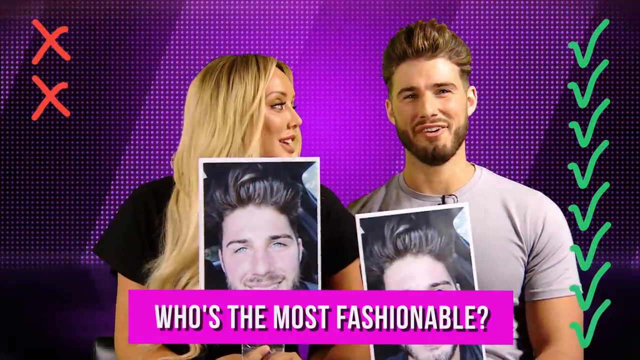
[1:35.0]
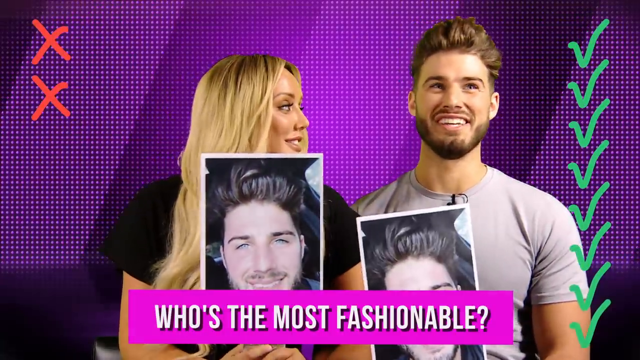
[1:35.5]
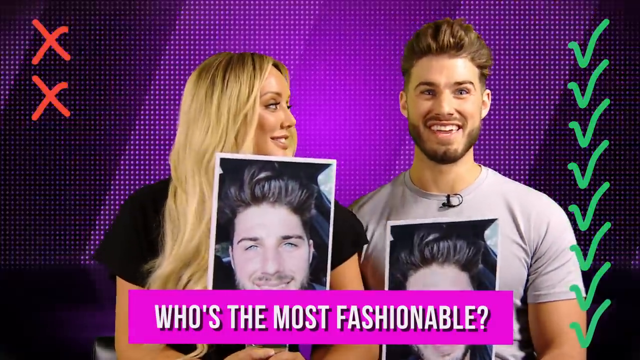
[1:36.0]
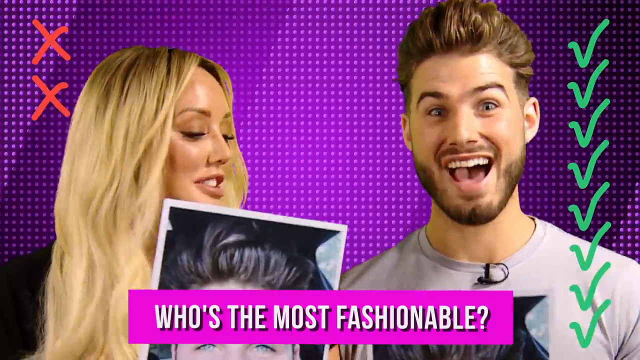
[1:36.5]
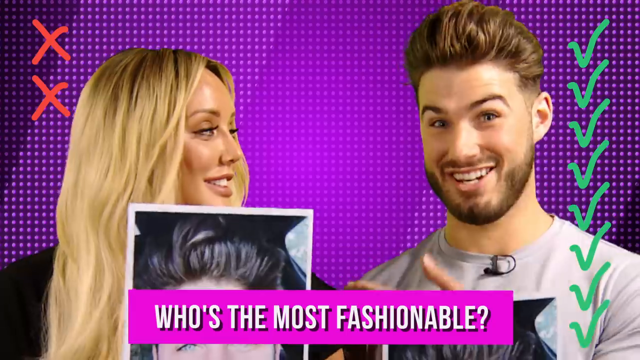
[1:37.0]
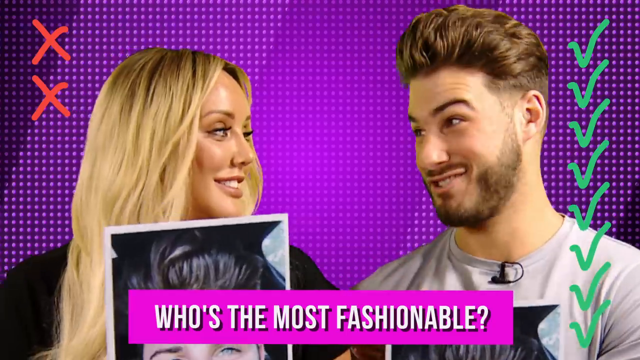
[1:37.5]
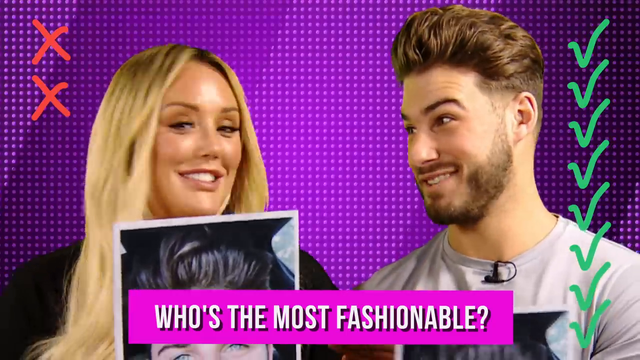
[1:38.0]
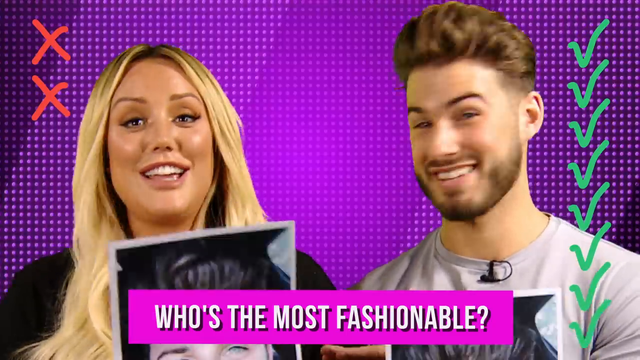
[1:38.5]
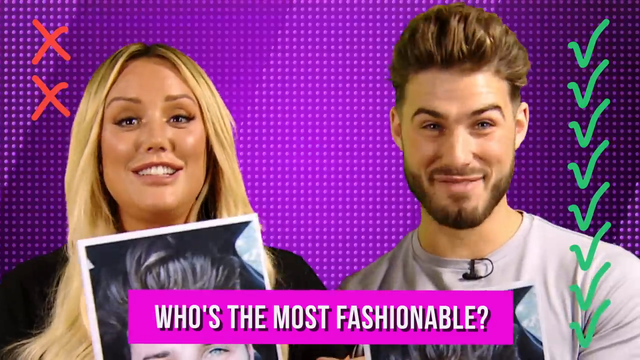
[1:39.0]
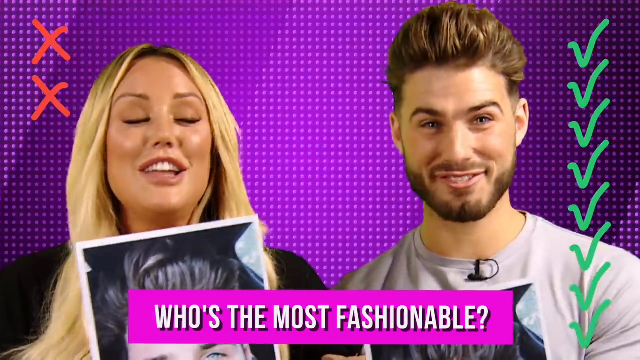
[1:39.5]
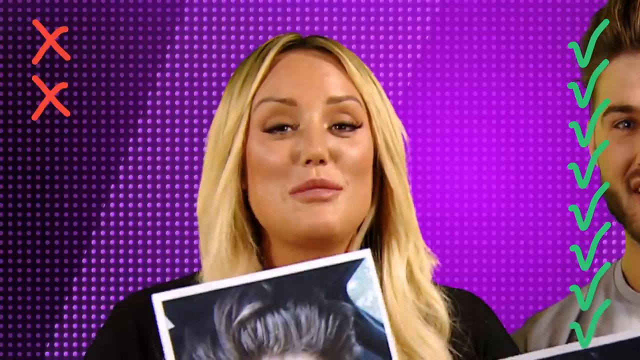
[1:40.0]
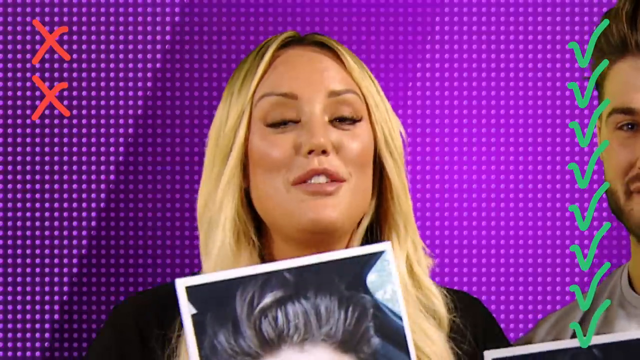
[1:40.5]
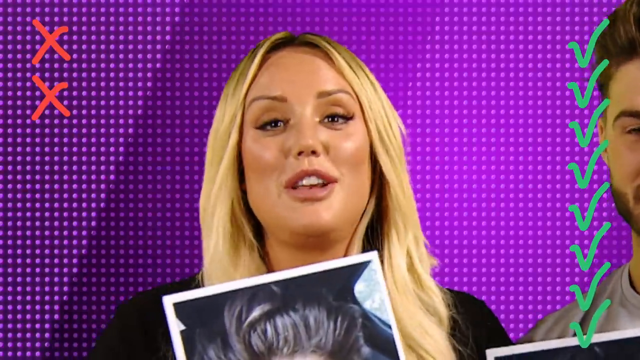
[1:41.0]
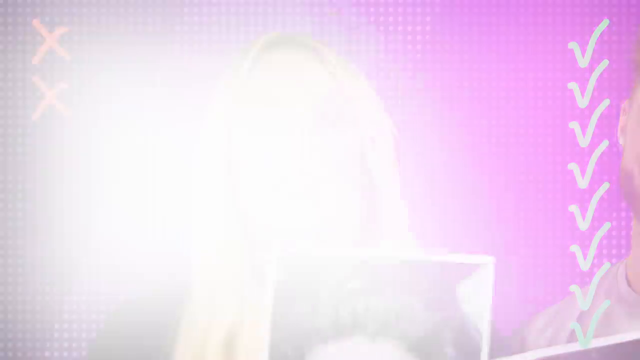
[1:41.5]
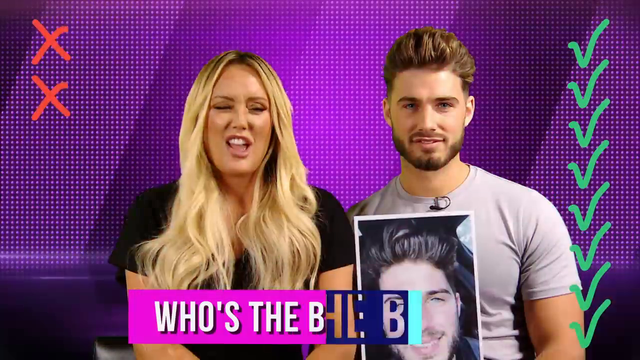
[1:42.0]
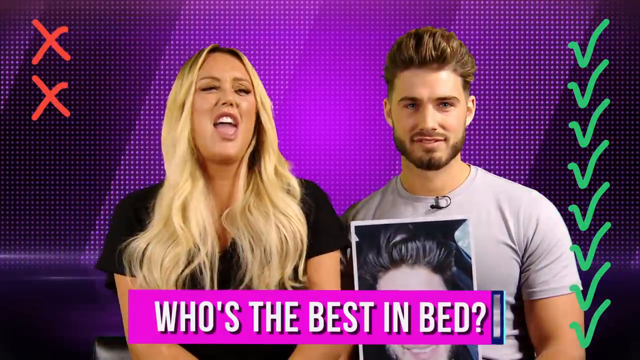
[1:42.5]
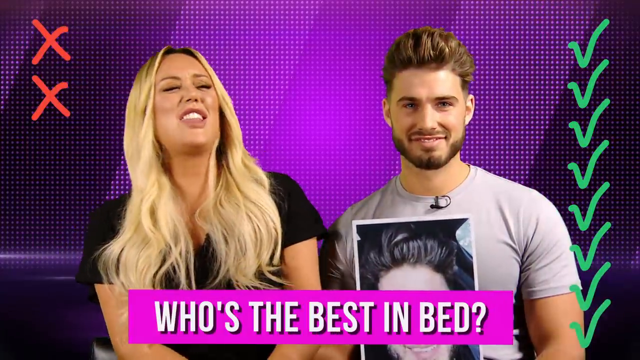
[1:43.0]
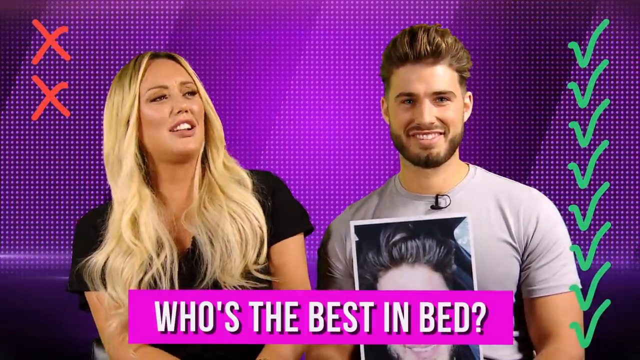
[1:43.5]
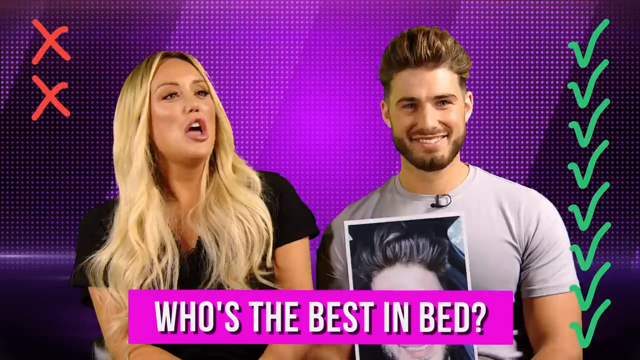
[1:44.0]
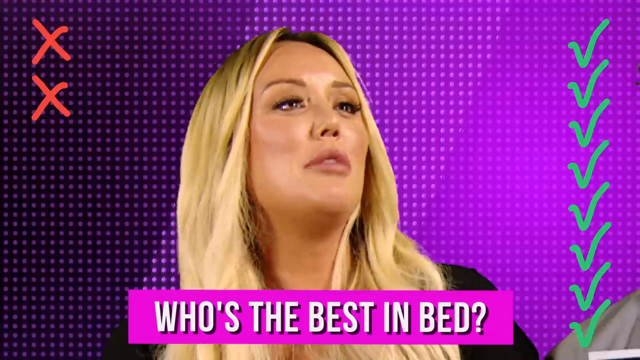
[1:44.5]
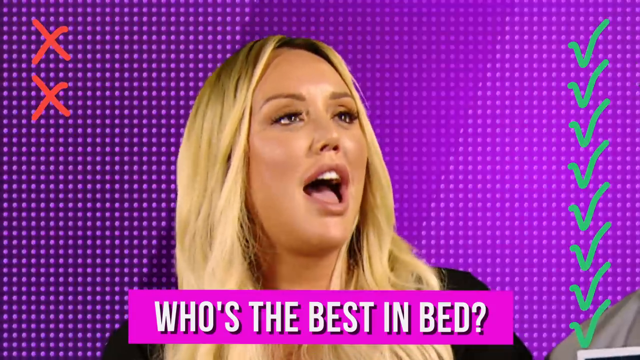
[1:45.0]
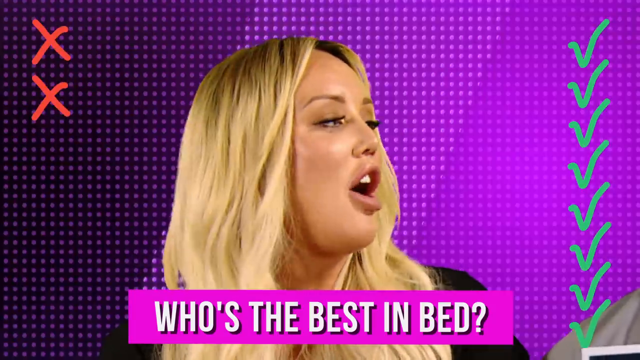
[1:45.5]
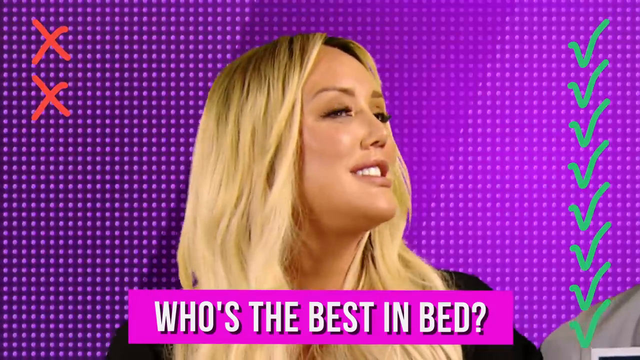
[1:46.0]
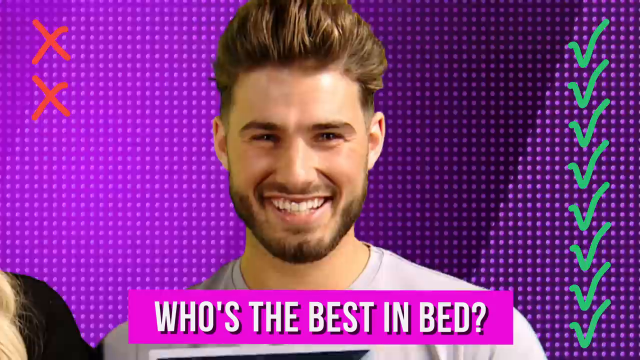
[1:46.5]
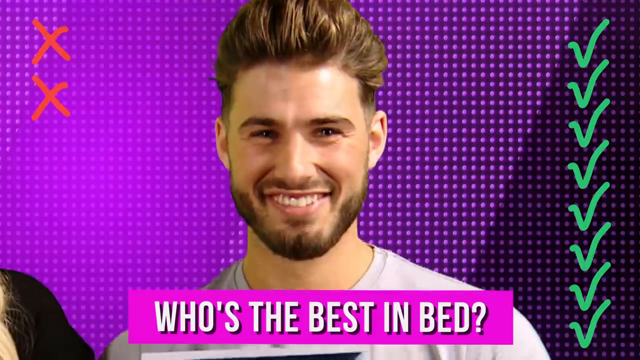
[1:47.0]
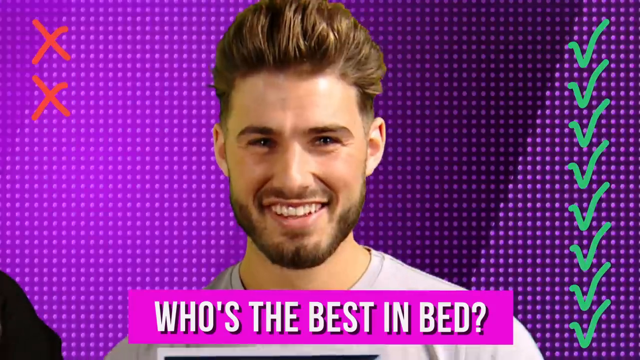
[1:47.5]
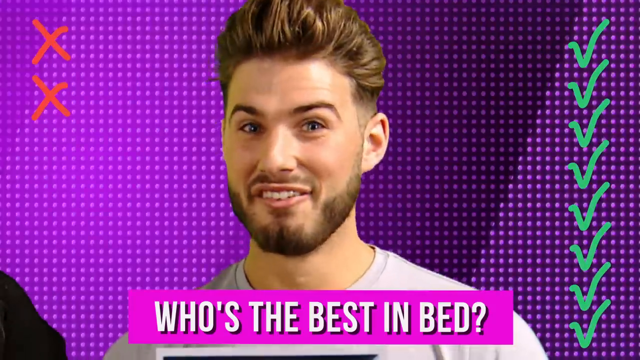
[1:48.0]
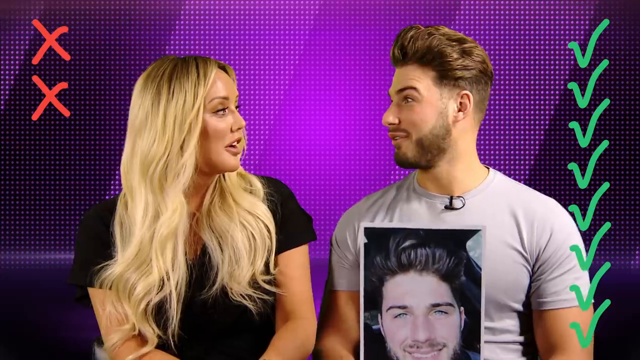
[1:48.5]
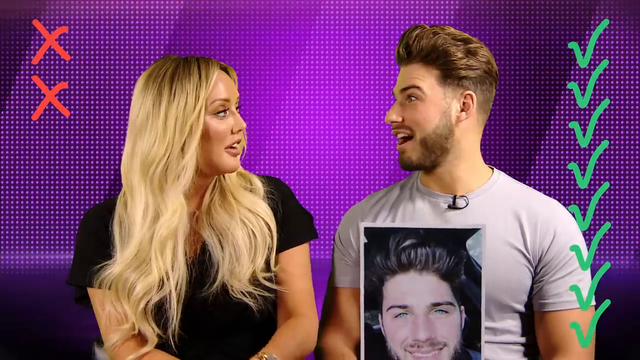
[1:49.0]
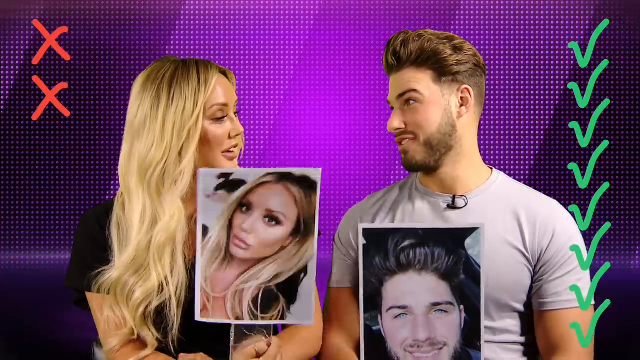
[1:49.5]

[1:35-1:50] On "who's the most fashionable," he is clearly confident that he is the most fashionable one. They both chat about it, and he gestures toward her while speaking. Then comes "who's the best in bed" and he holds up a picture of himself. She delays holding up her picture and makes commentary, looking mildly in disbelief, while he looks very amused and laughs for a moment while looking at her. Then she holds up a picture of herself.